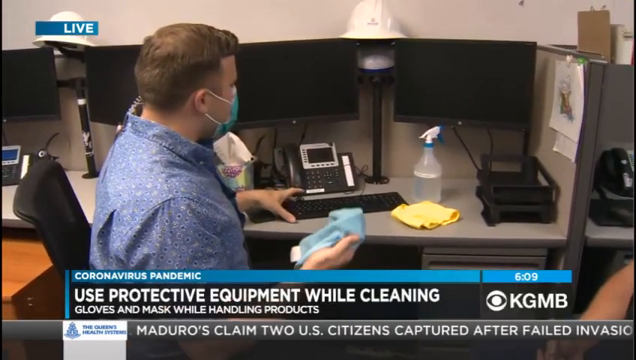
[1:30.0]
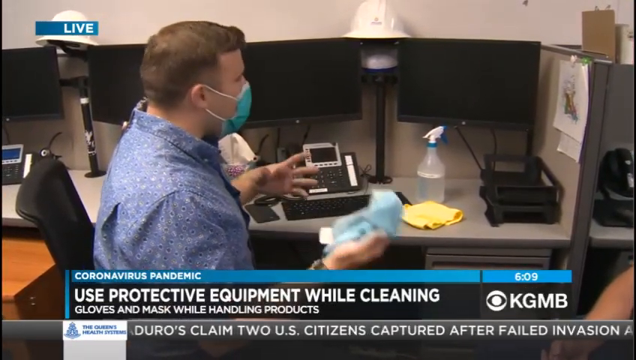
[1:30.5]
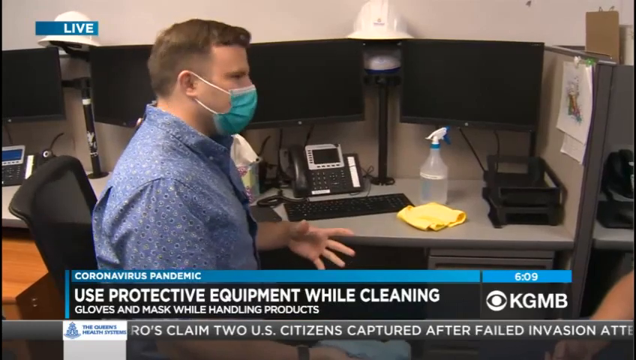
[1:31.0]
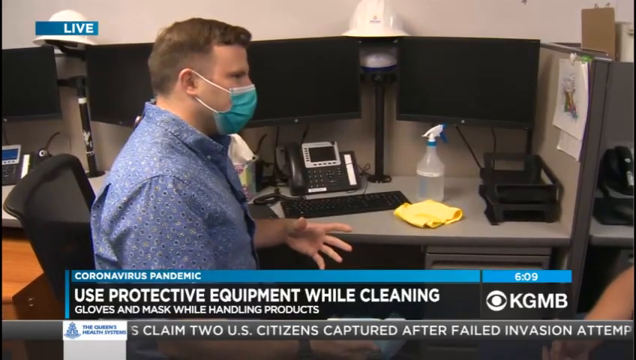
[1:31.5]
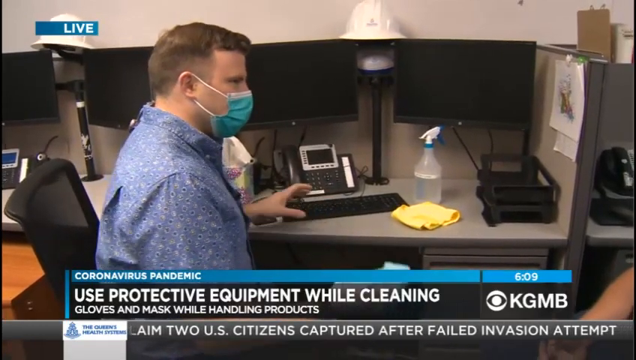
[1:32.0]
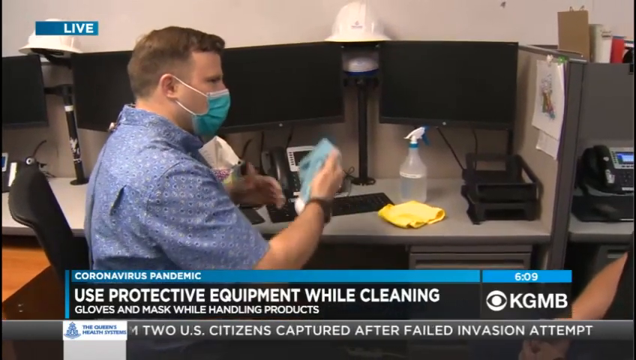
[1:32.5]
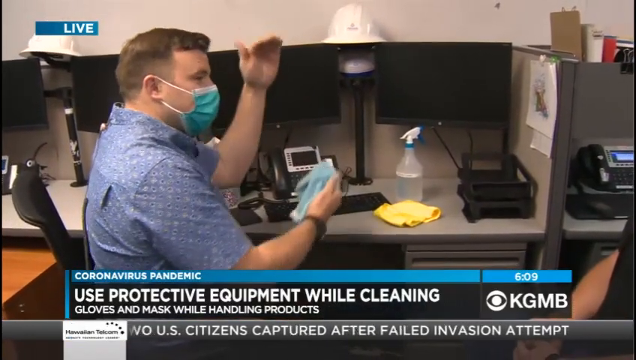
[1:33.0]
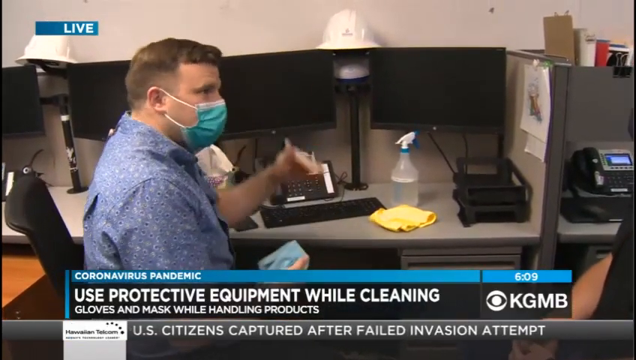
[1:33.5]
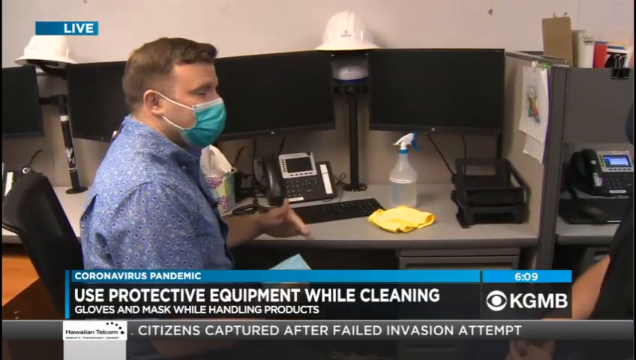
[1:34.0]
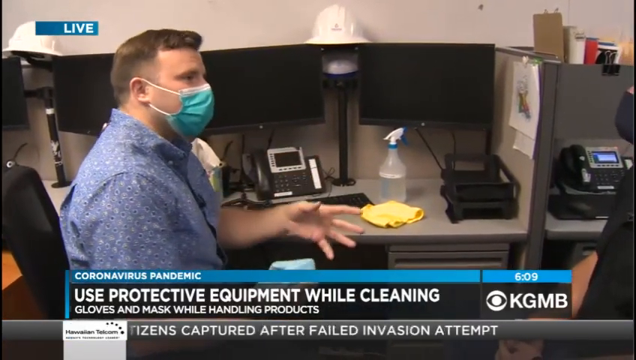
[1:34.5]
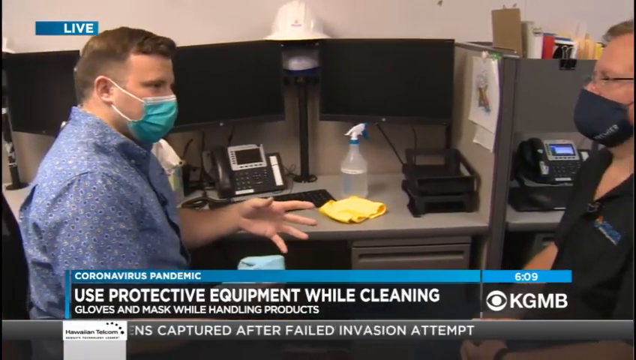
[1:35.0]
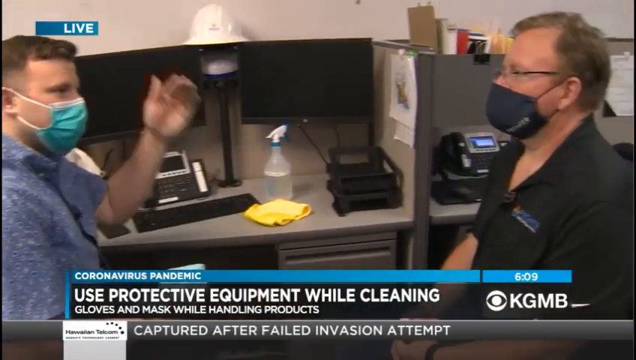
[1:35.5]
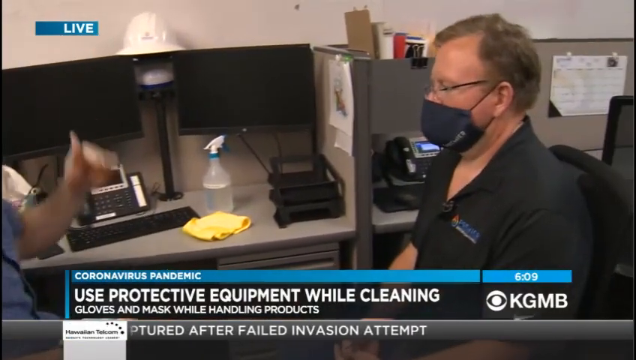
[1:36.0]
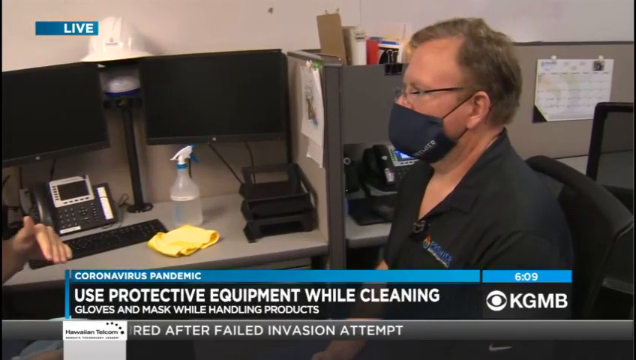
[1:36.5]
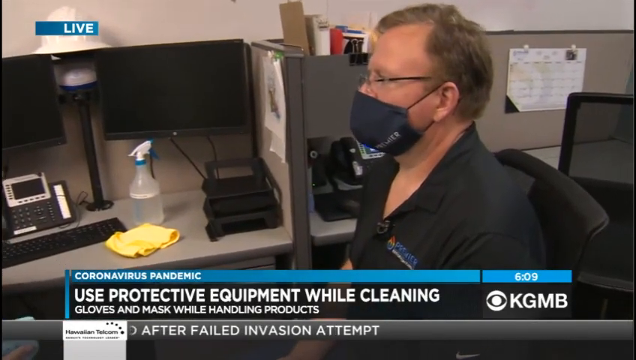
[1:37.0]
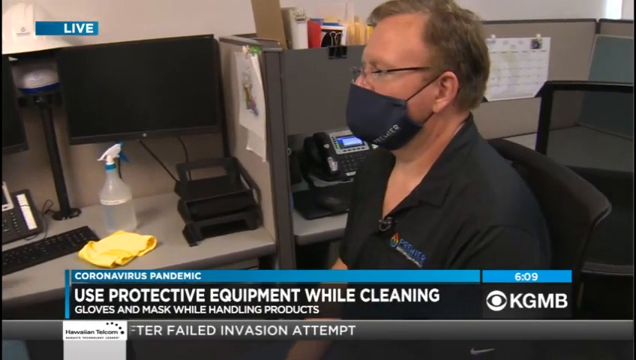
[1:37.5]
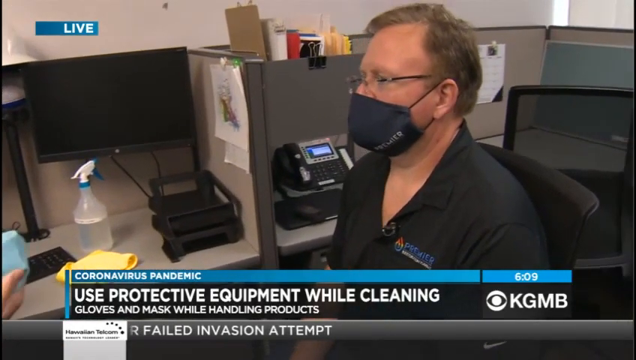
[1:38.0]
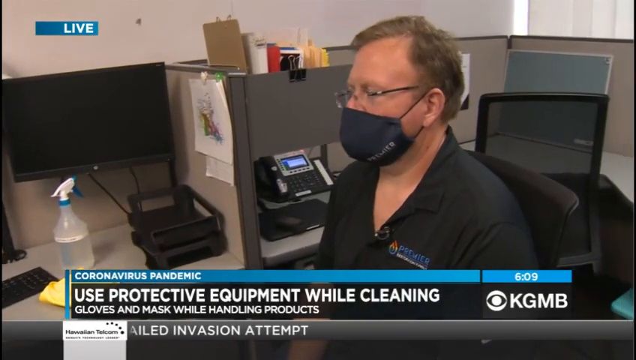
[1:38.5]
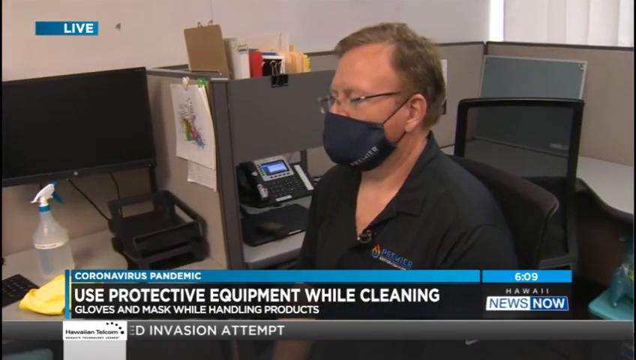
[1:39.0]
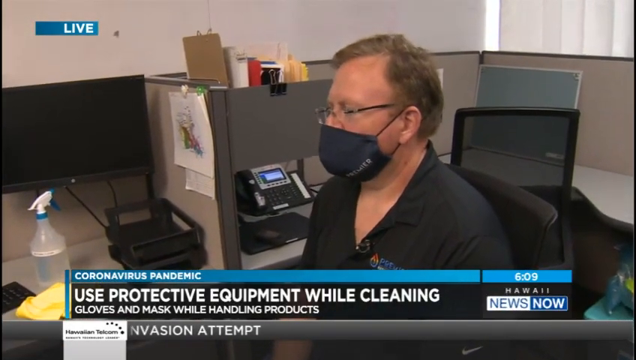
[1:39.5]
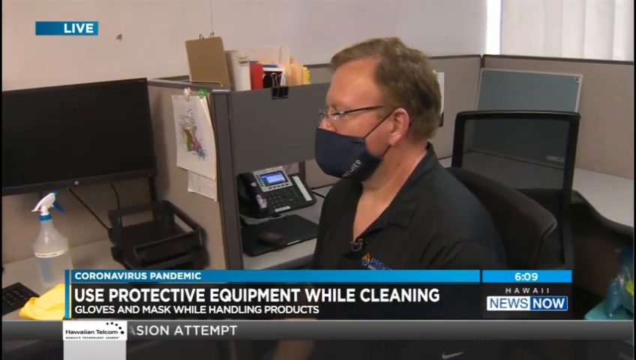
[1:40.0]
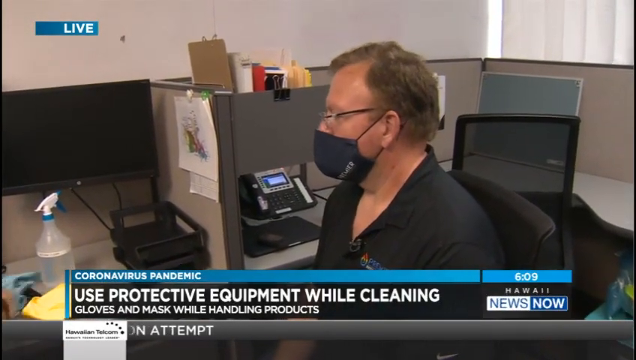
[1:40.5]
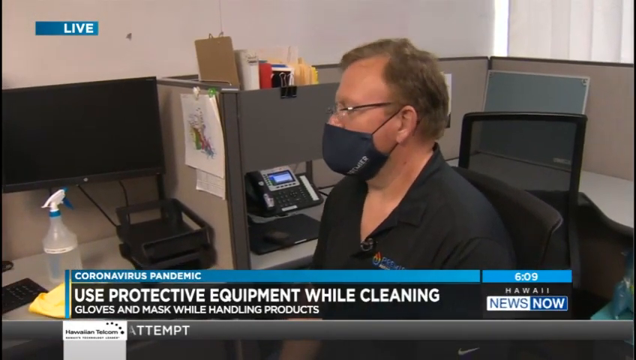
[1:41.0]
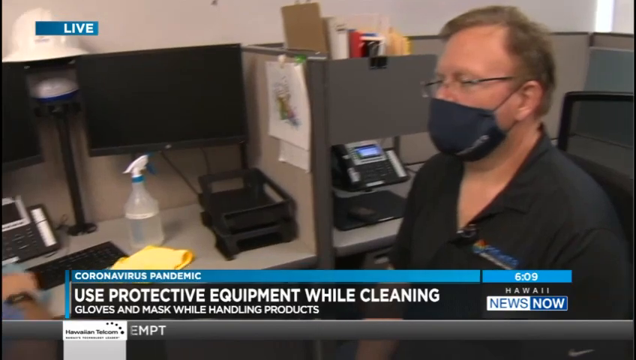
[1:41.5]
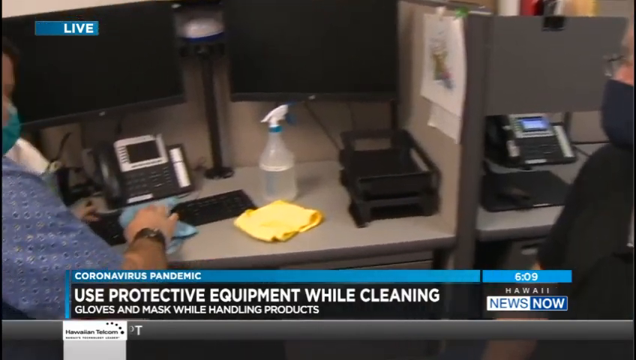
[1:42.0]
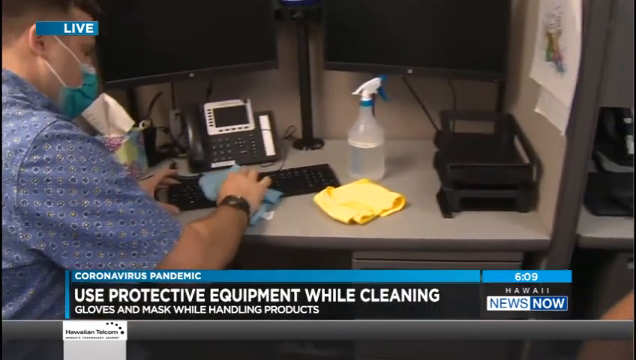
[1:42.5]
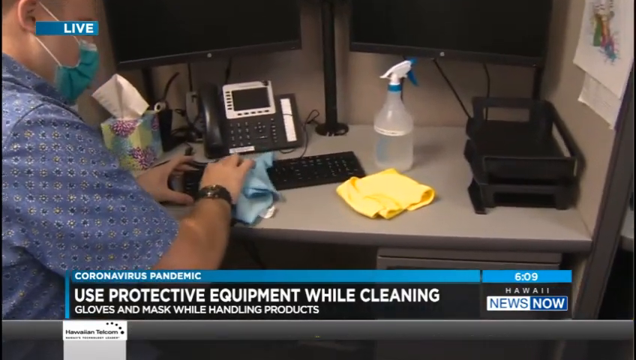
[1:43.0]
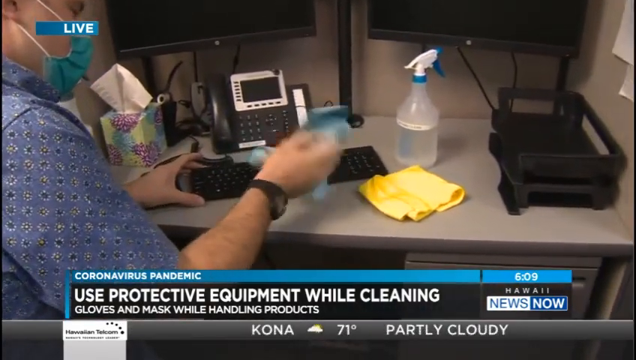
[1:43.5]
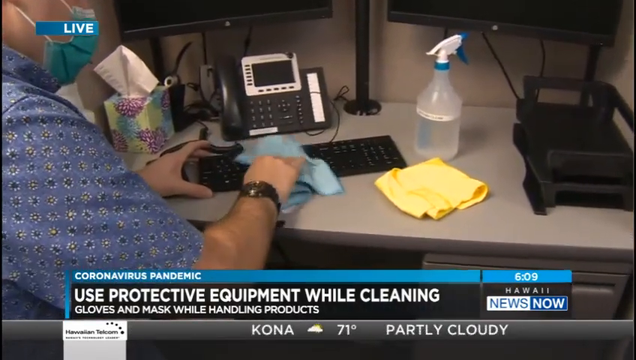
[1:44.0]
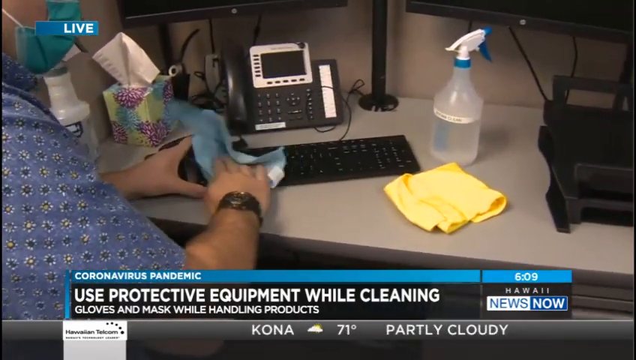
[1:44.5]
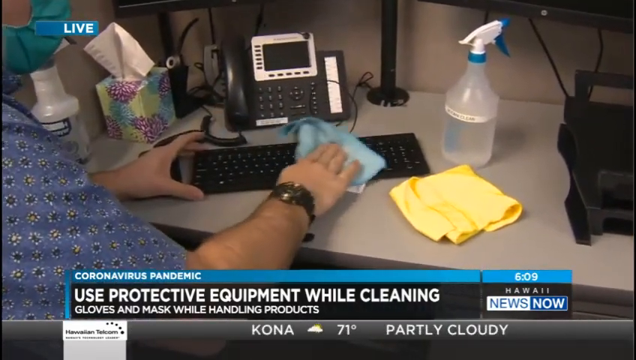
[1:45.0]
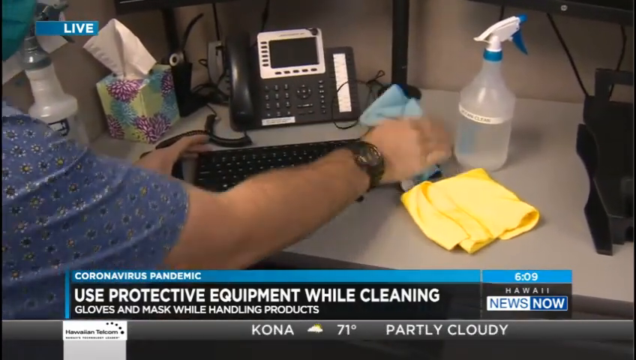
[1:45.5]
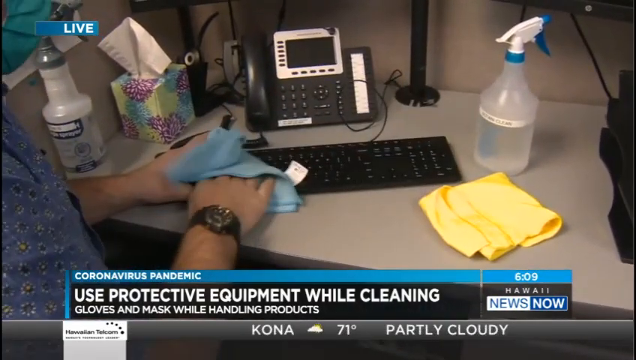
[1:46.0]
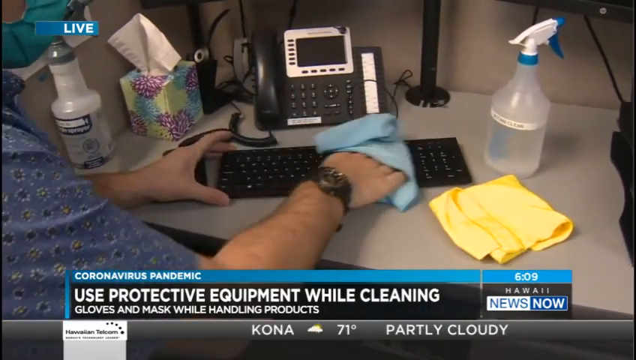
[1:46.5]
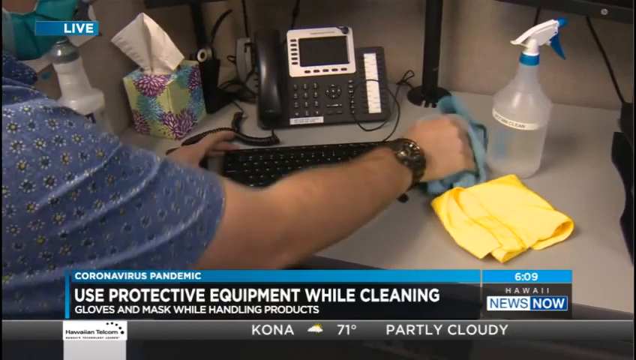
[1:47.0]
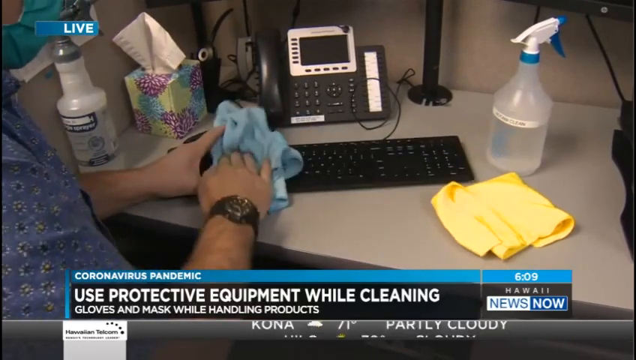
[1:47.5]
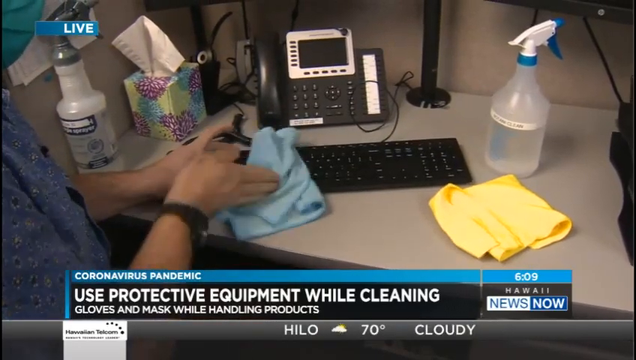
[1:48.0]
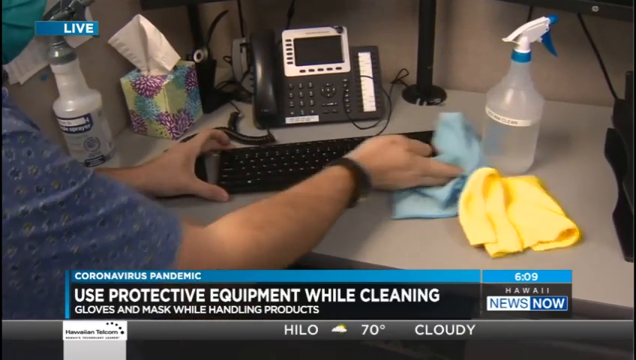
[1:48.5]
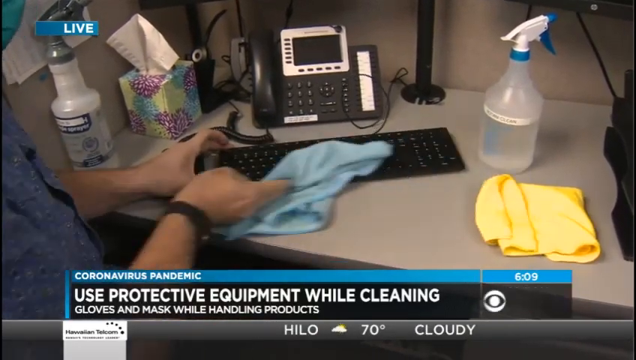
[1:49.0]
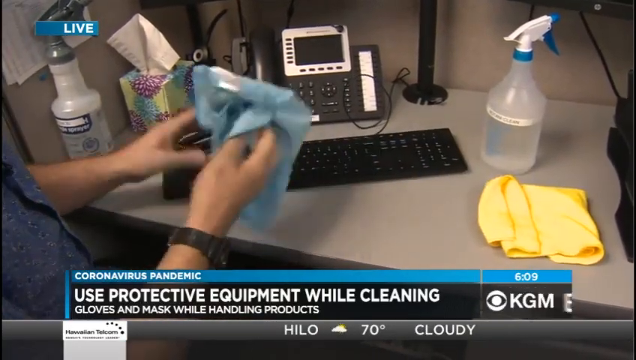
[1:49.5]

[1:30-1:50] The same man who was wiping equipment with a blue towel makes hand gestures as he keeps speaking to the man on the right. The camera then pans more toward the man on the right. The man on the left grabs the blue towel and wipes the keyboard. News updates along the bottom center read "Maduro's claim to U.S. citizens captured after failed invasion attempt", followed by "Kona, 71 degrees, partly cloudy" and "High, low, 70 degrees, cloudy". The rectangular video is filmed indoors with plenty of artificial light, keeping everything clear and visible; it is of good quality with smooth transitions.